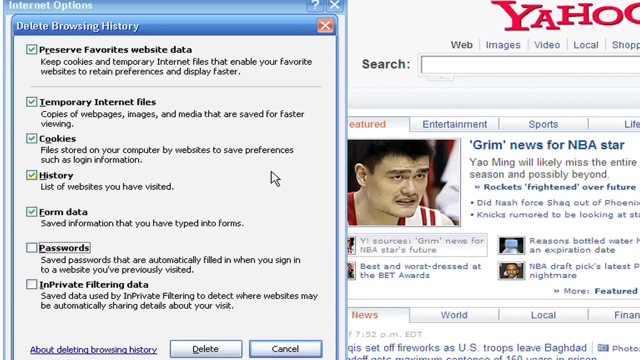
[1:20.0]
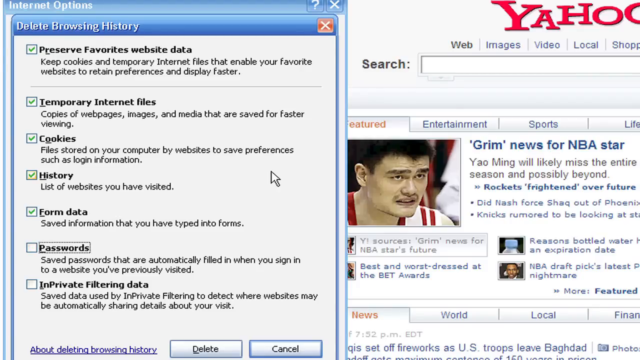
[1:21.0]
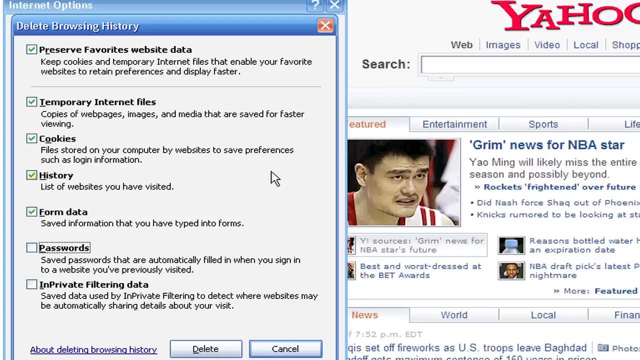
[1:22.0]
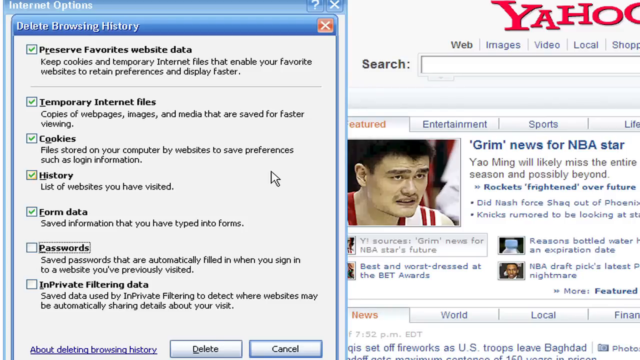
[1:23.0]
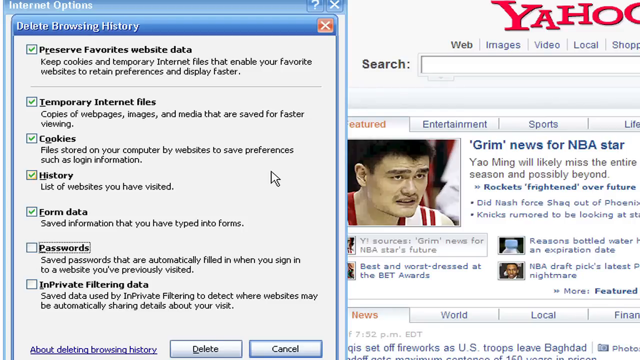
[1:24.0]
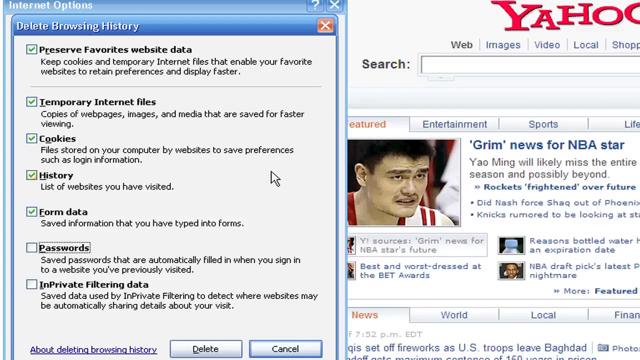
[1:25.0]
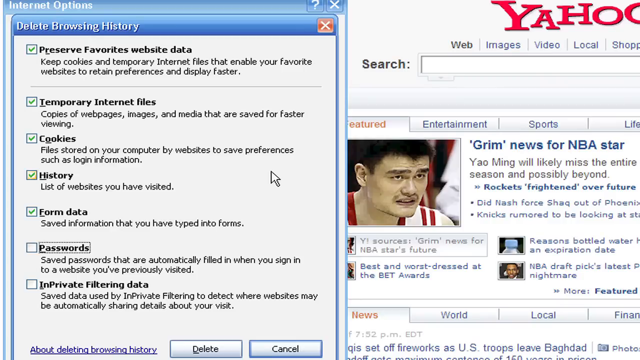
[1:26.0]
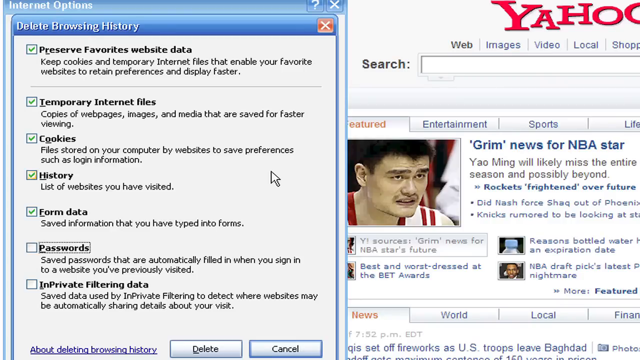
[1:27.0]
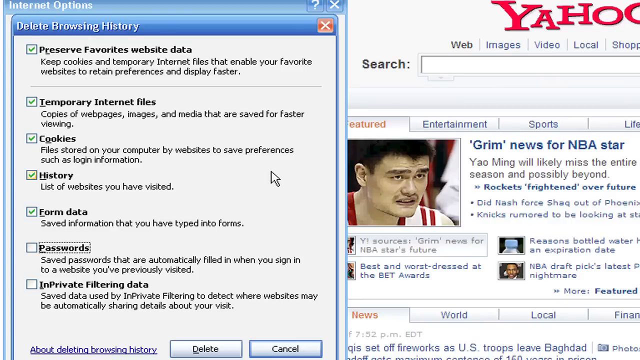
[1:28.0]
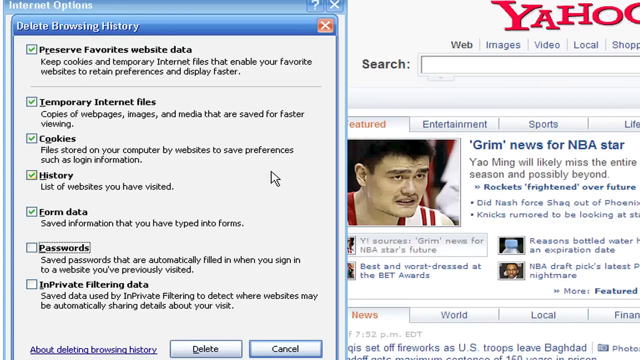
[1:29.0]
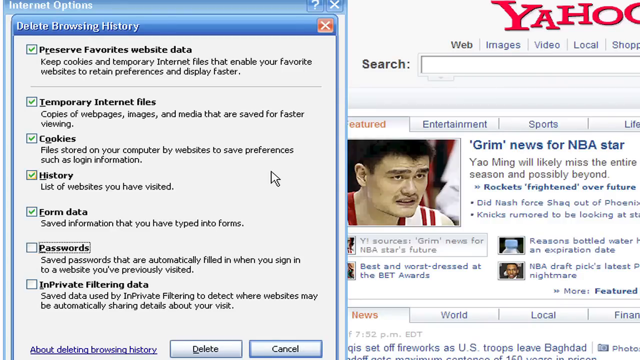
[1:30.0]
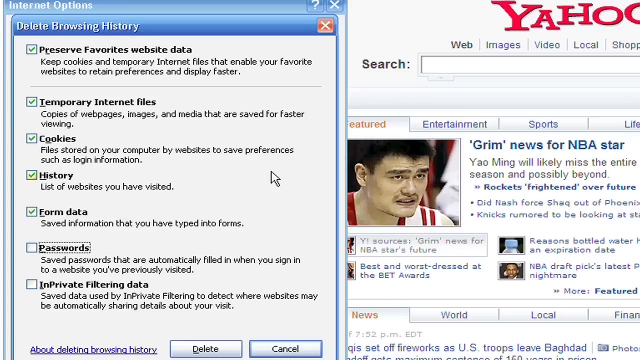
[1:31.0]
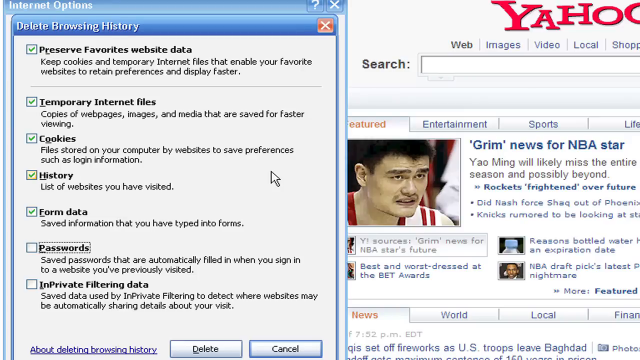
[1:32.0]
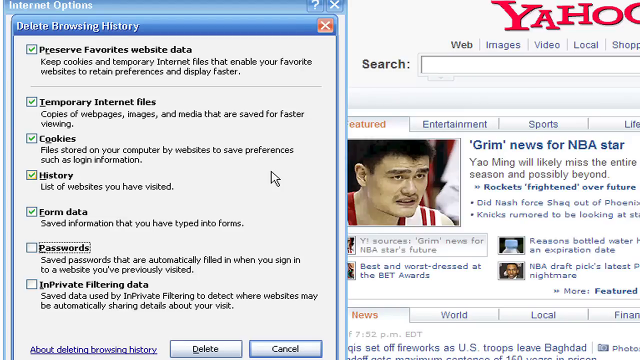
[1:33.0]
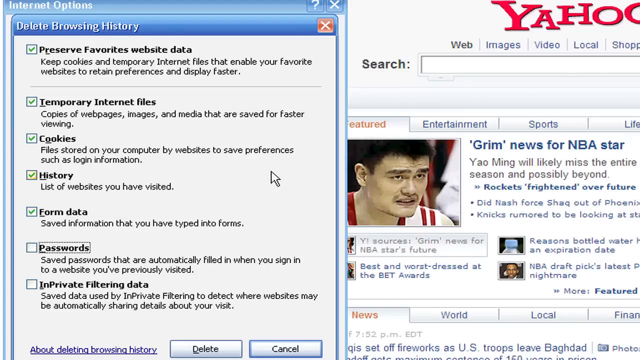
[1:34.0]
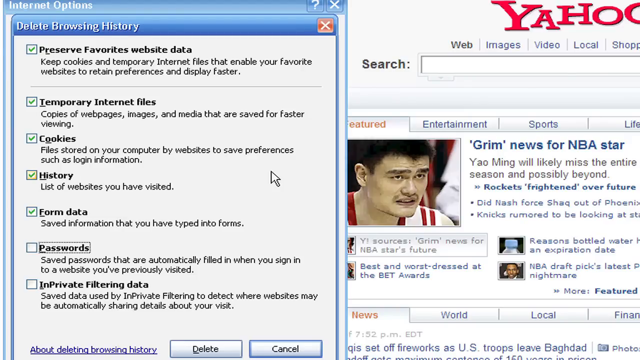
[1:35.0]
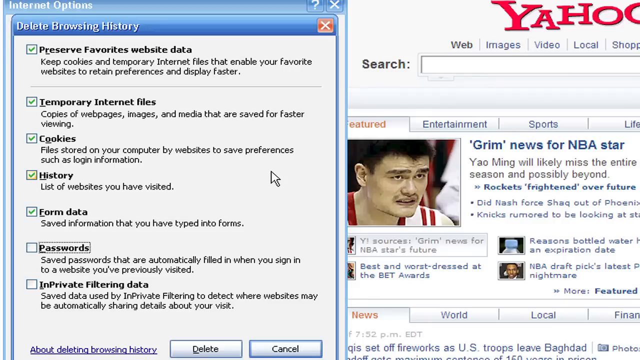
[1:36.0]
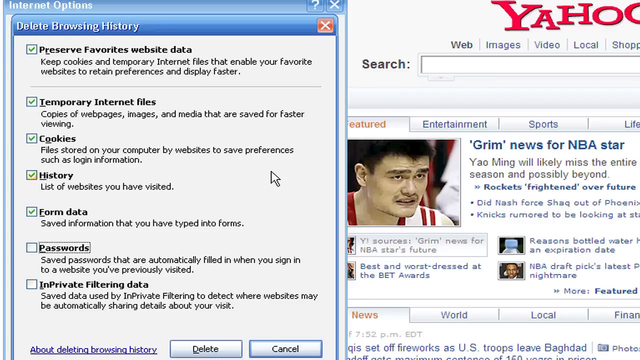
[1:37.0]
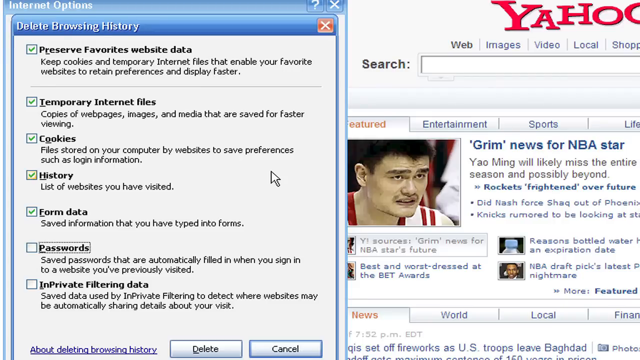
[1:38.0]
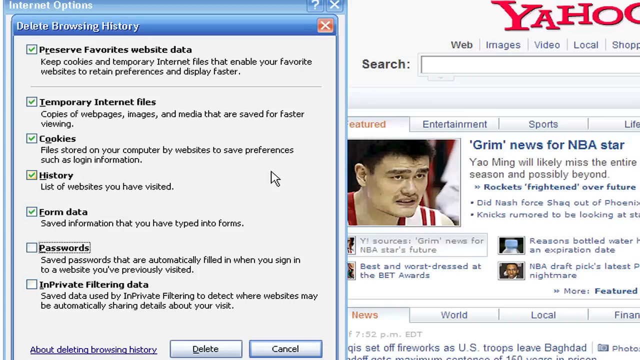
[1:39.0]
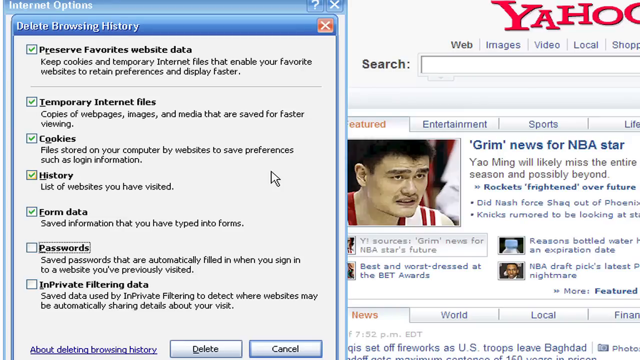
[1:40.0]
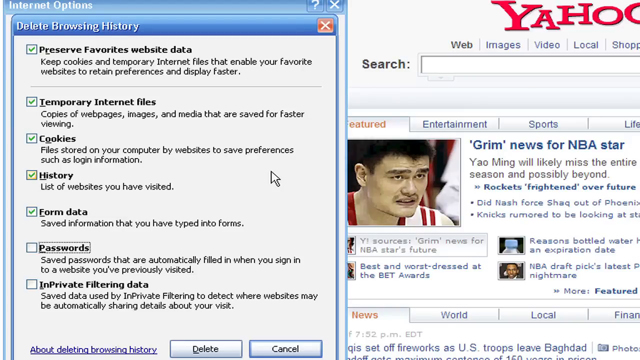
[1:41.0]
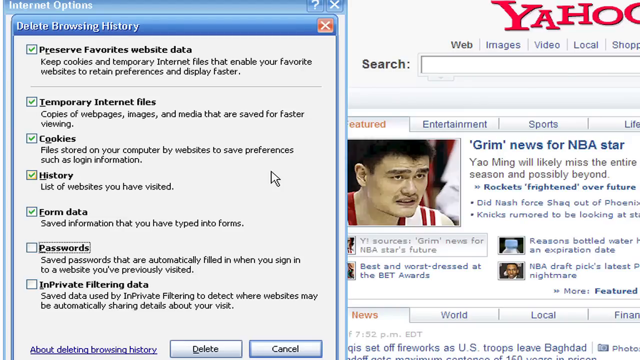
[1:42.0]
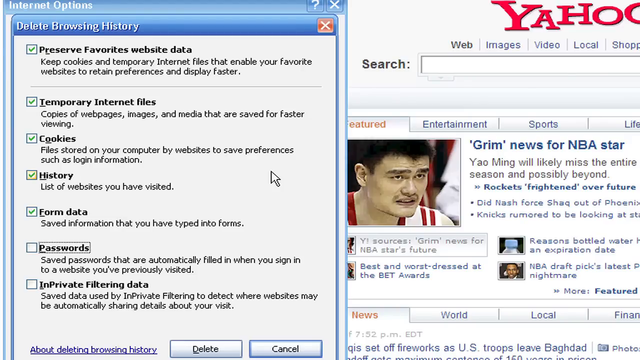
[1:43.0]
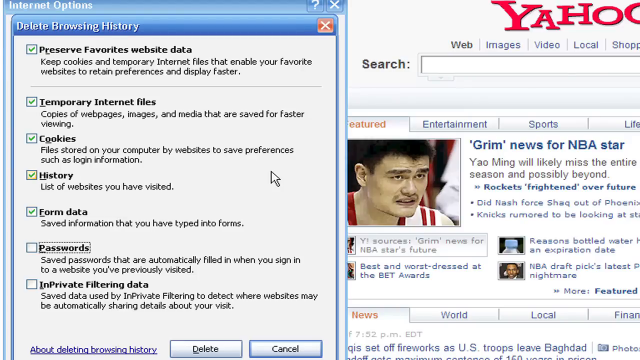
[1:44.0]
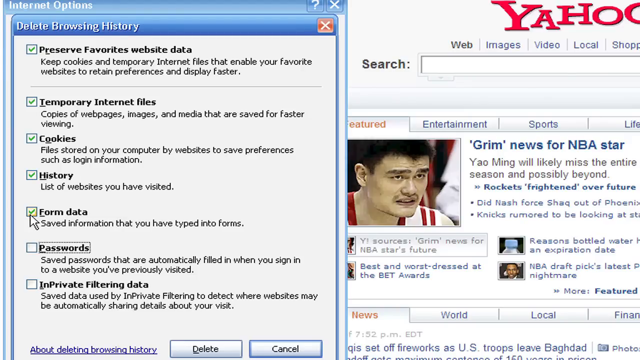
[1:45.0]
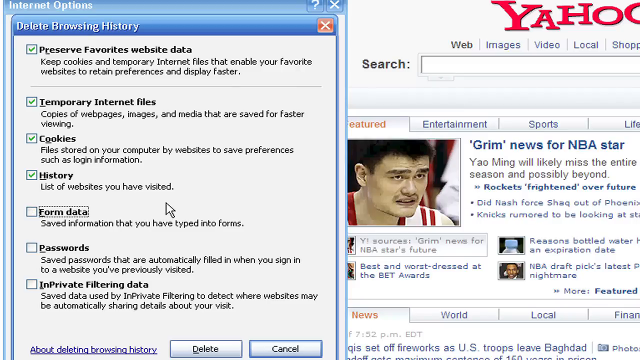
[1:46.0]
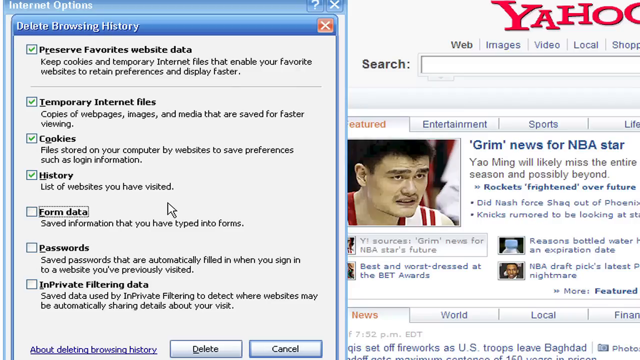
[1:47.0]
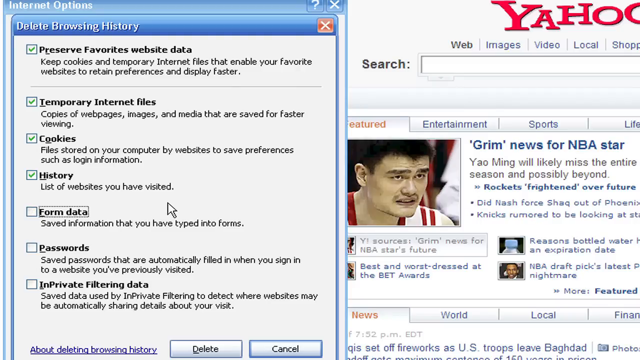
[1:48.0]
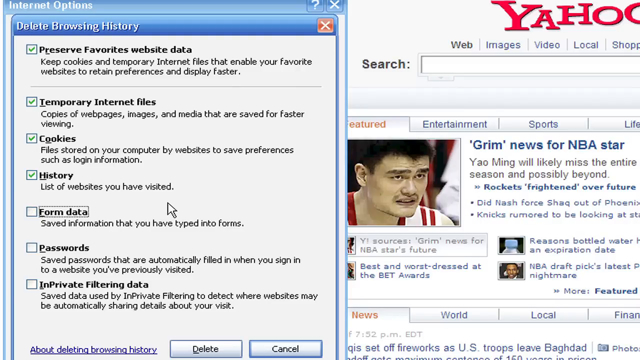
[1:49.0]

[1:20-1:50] The person continues exploring the Internet Options, with the Delete Browsing History window open. It reads "Preserve favorites website data, keep cookies and temporary internet files that enable your favorite website to retain preferences and display faster", "Temporary internet files, copies of web pages, images, and media", "Cookies, files stored on your computer by websites to save preferences such as login information", "History, list of websites you have visited", "Form data, saved information that you have typed into forms" and "Passwords, saved passwords that are automatically filled in when you sign into a website you've previously visited", along with an InPrivate filtering data option. The person waits on this page without moving the mouse at all; nothing is being done.